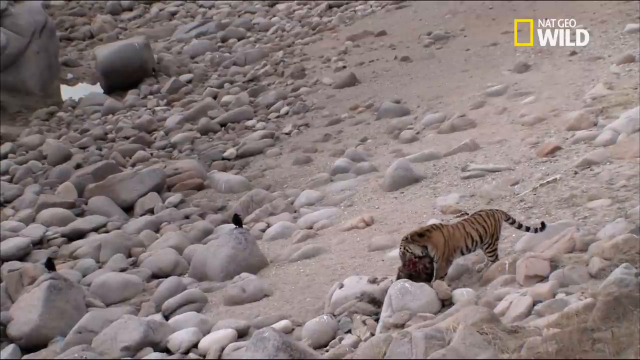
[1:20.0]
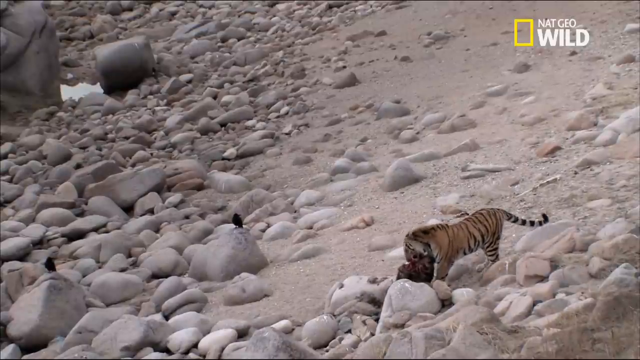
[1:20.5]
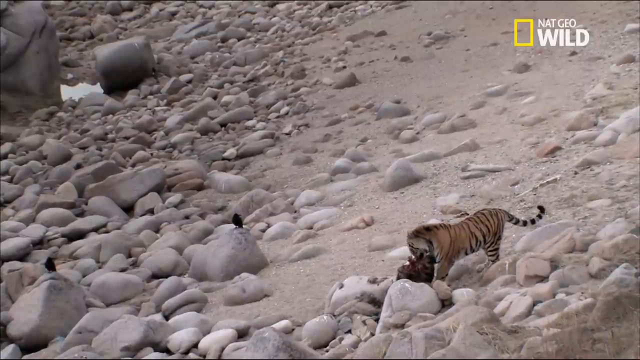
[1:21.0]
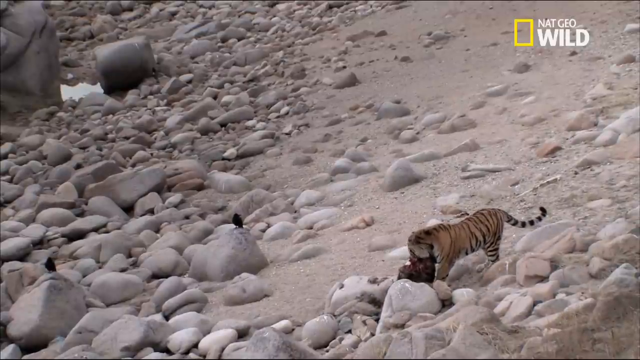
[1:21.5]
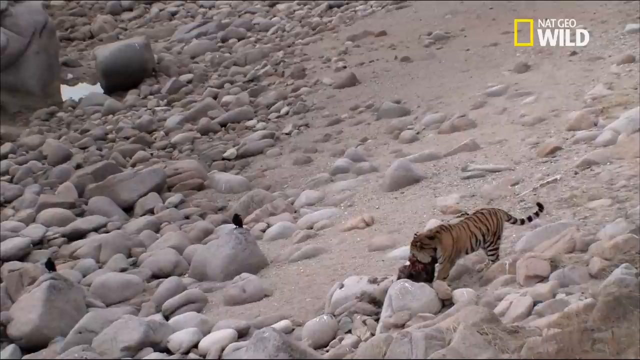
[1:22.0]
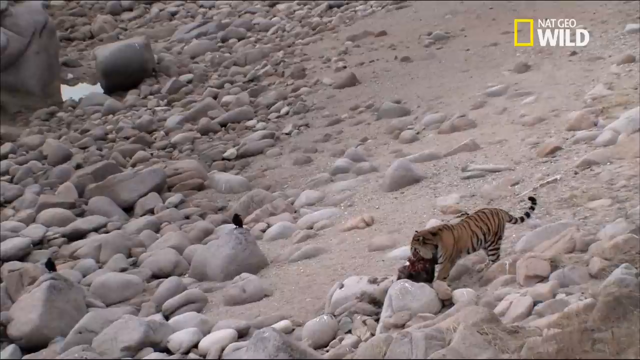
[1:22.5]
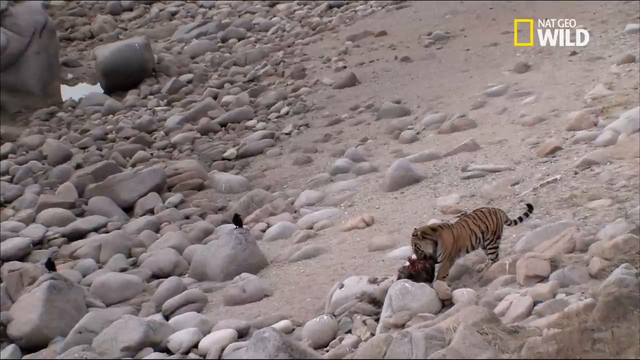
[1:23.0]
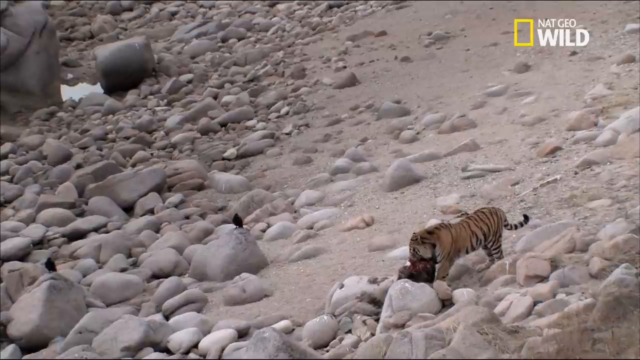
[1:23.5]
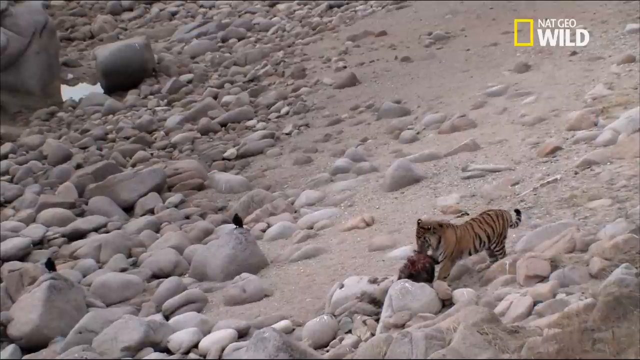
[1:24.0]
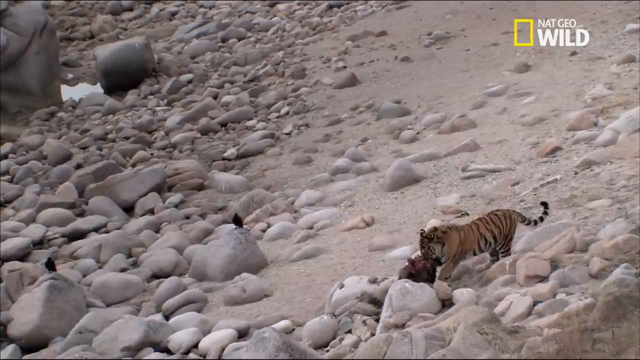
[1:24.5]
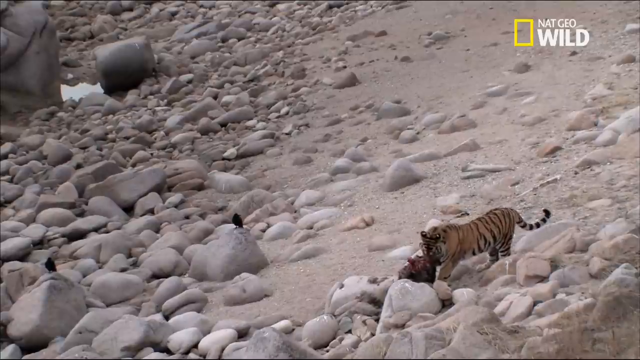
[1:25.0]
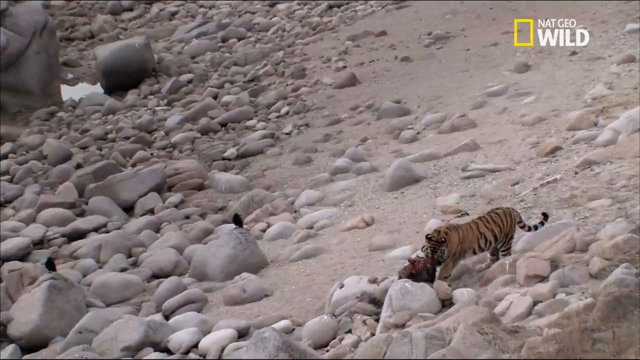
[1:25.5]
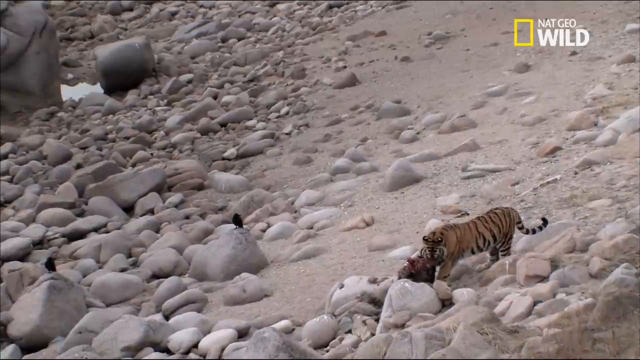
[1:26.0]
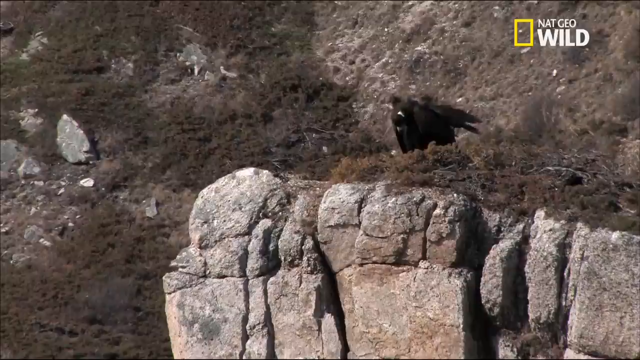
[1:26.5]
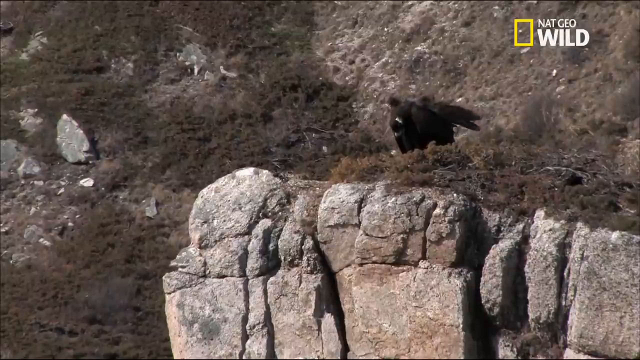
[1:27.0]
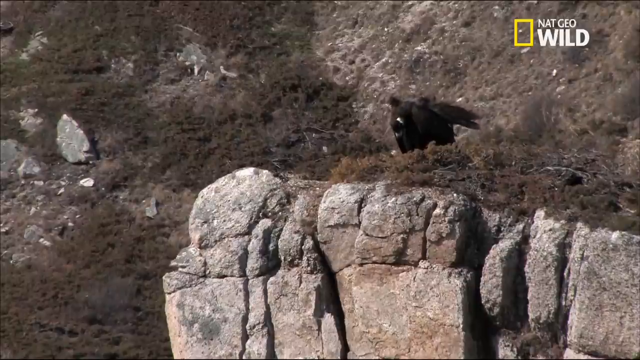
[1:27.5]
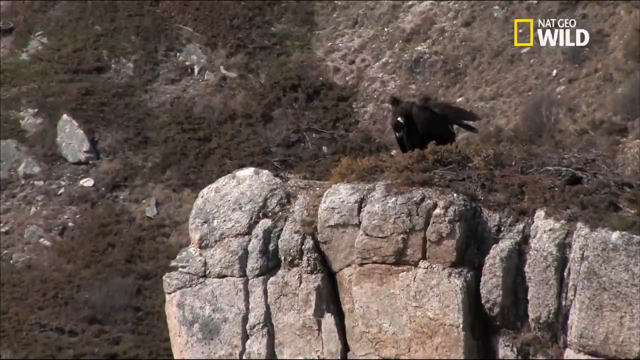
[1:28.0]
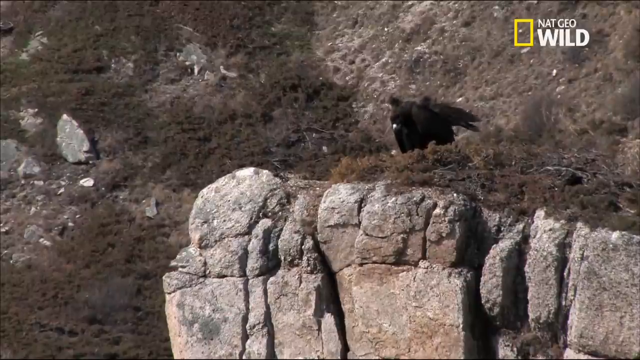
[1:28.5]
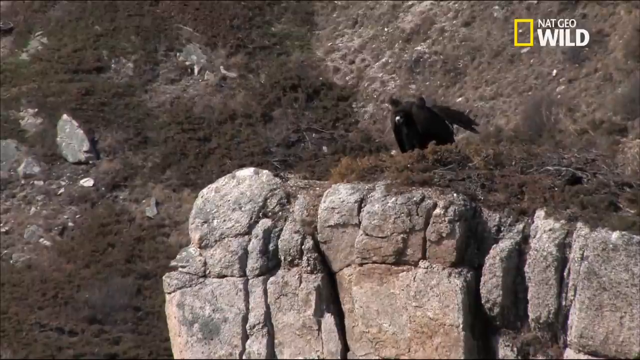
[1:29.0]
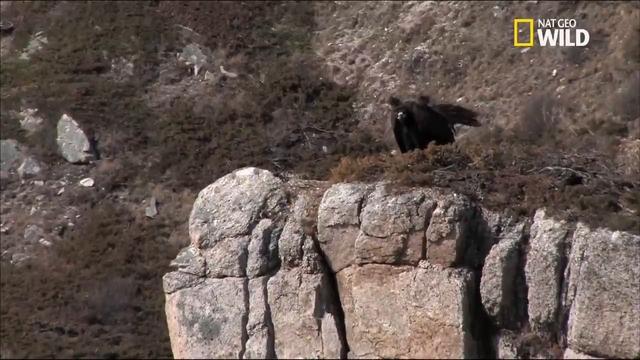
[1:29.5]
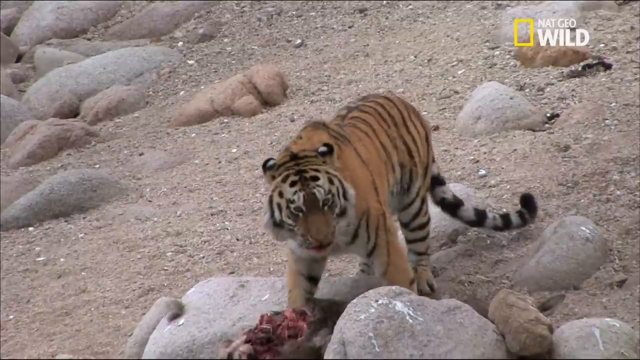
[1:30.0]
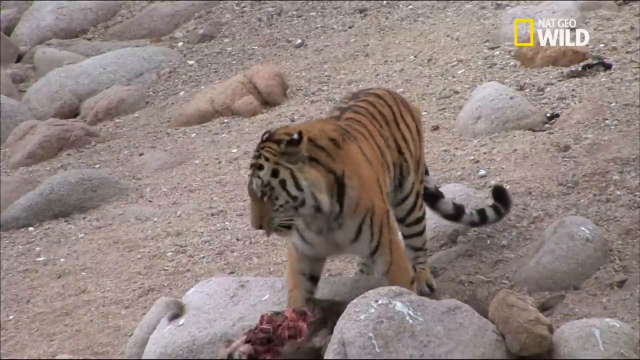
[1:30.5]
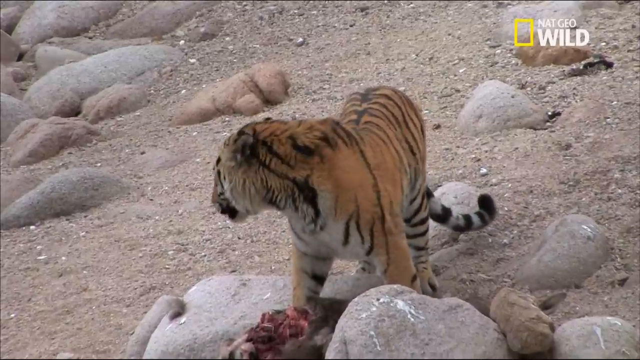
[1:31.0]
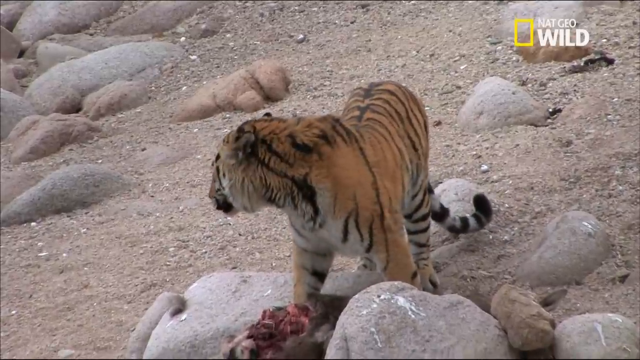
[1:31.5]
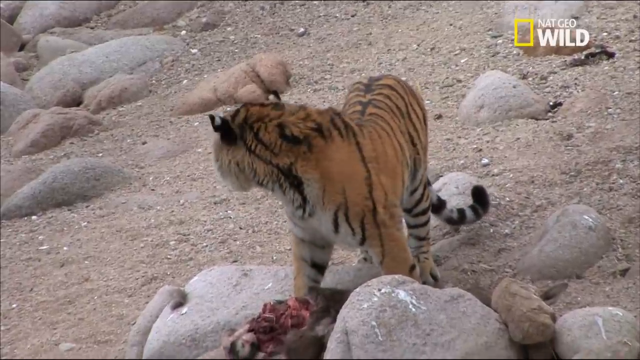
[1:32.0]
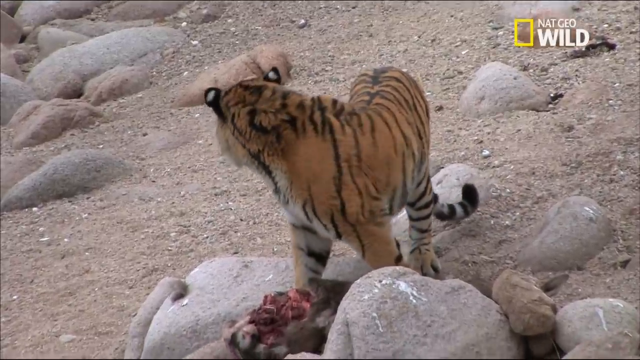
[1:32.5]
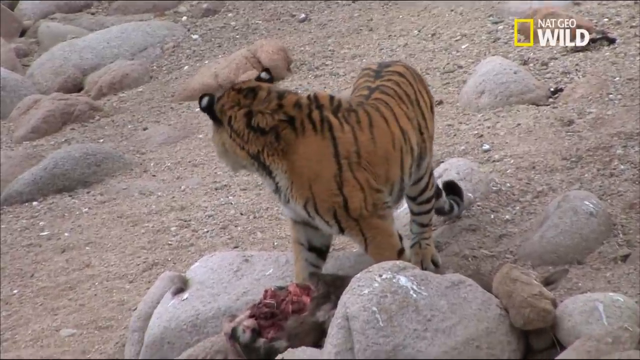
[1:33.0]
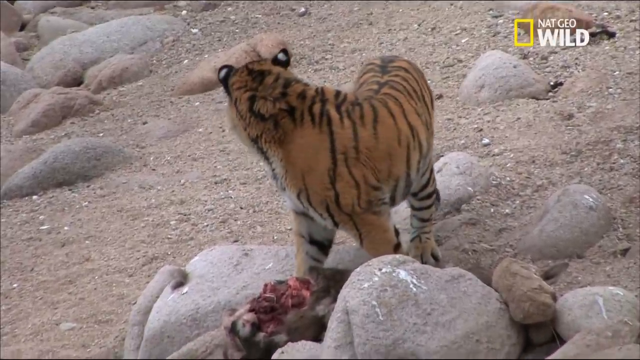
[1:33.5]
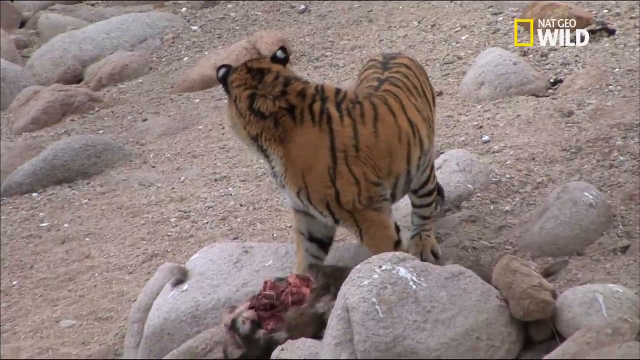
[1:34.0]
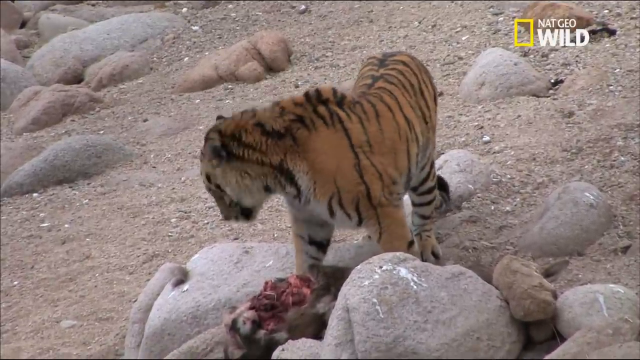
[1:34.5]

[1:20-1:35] The tiger holds on to the bird and eats it right there on the shoreline. The bird is black and has a major gash. The tiger seems to take its time eating; after a few bites it pulls its head up and looks around. It is on top of two gray rocks, with fine sand spread around the side of the gray rock. The camera pans to a ledge above and to the right, where a black bird is perched, looking down at the tiger eating. The black bird is possibly waiting to eat the remains, and it also looks like it may be sitting on top of a nest of its young.